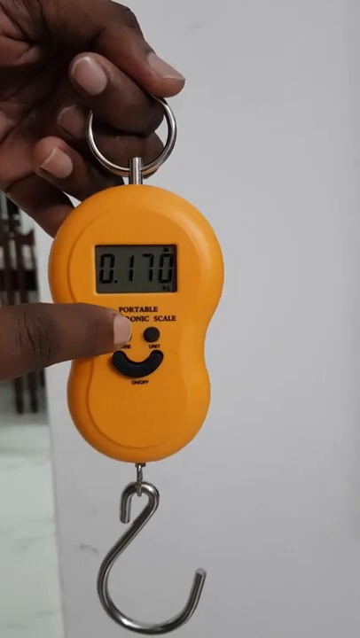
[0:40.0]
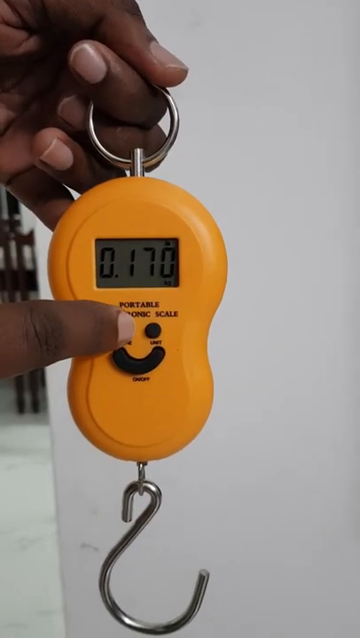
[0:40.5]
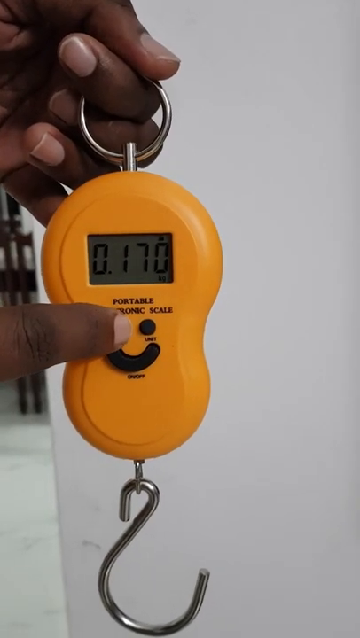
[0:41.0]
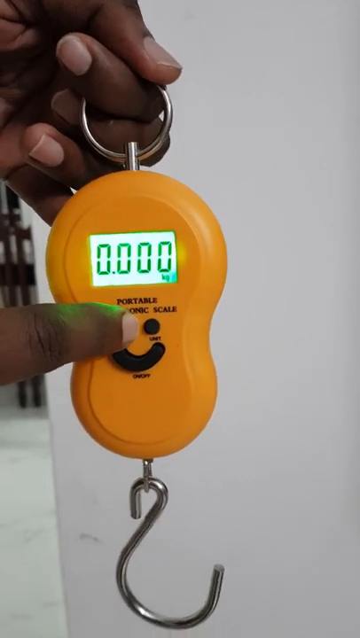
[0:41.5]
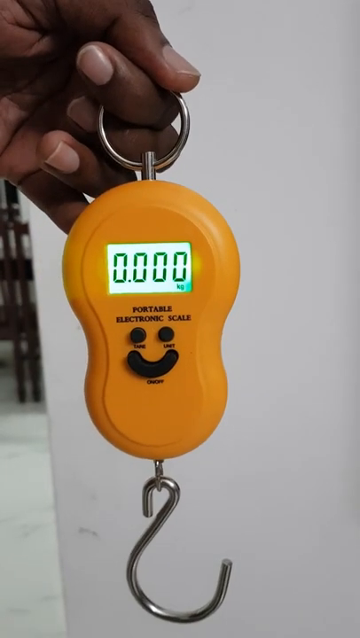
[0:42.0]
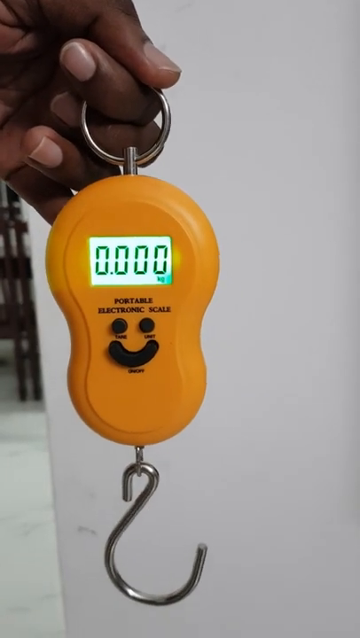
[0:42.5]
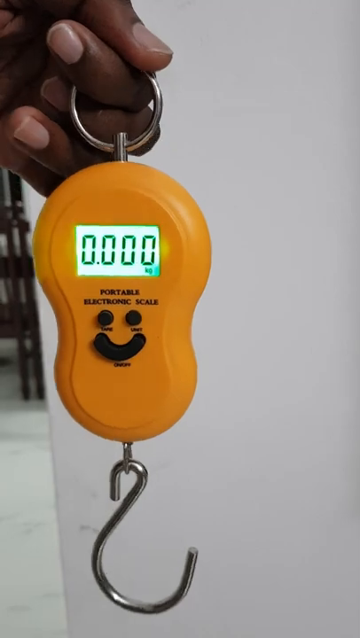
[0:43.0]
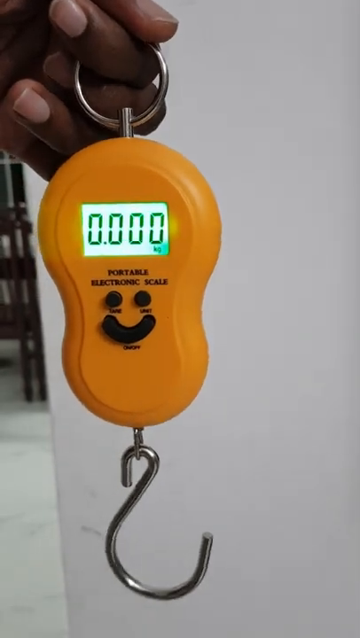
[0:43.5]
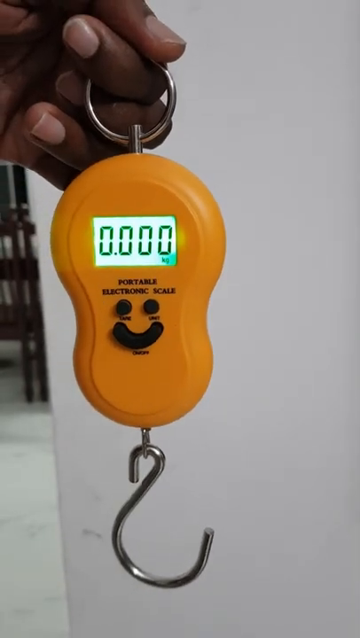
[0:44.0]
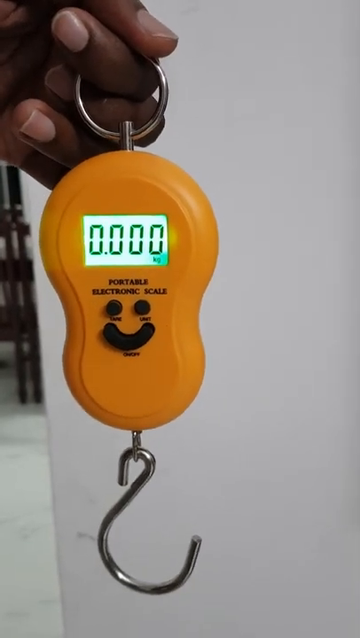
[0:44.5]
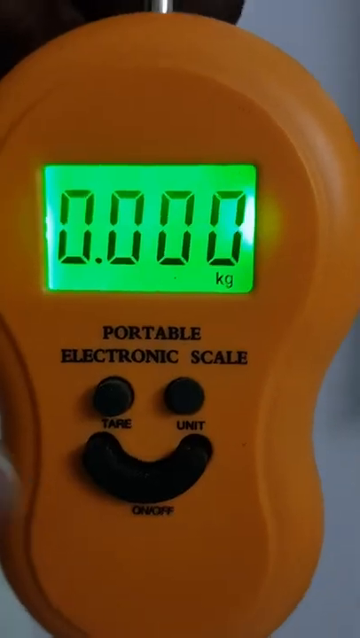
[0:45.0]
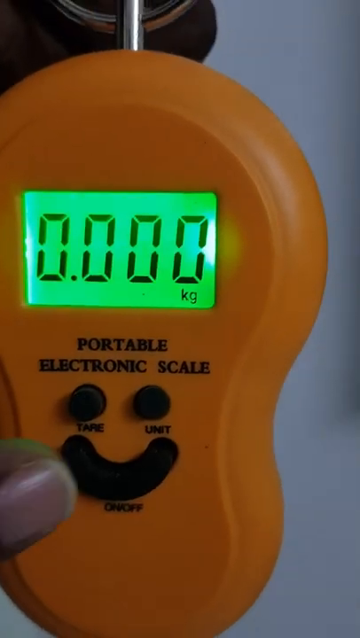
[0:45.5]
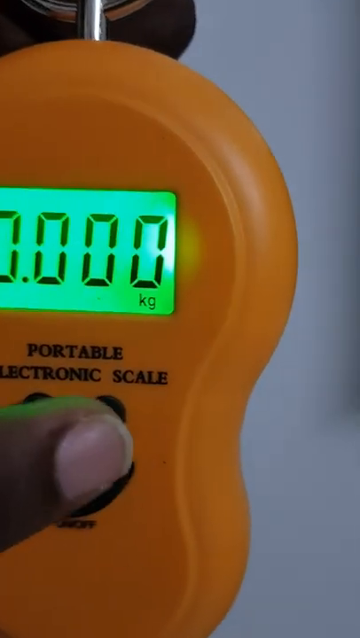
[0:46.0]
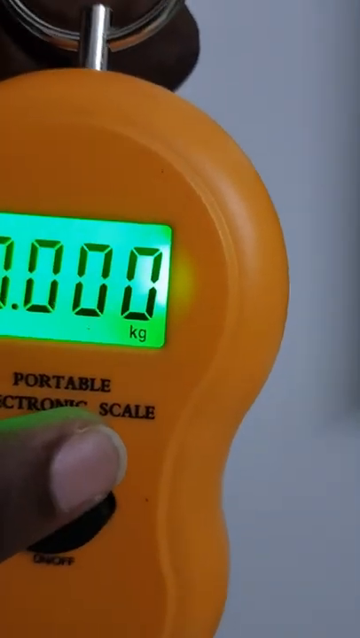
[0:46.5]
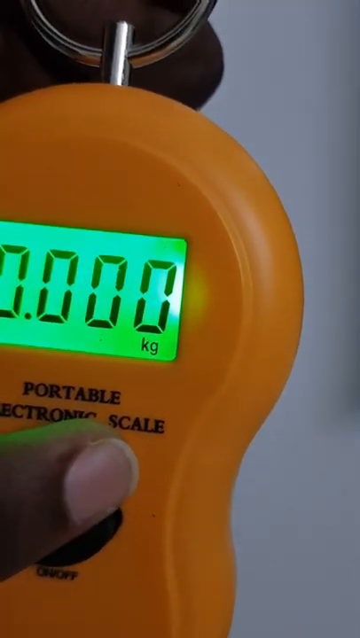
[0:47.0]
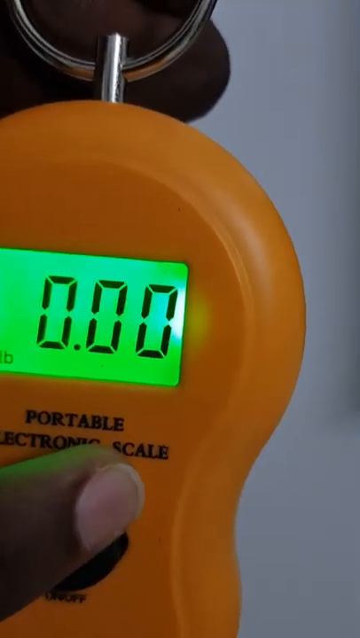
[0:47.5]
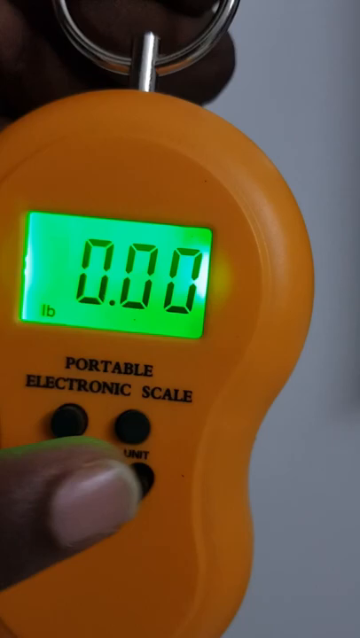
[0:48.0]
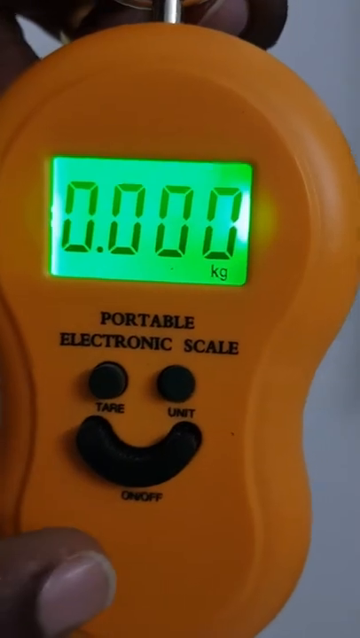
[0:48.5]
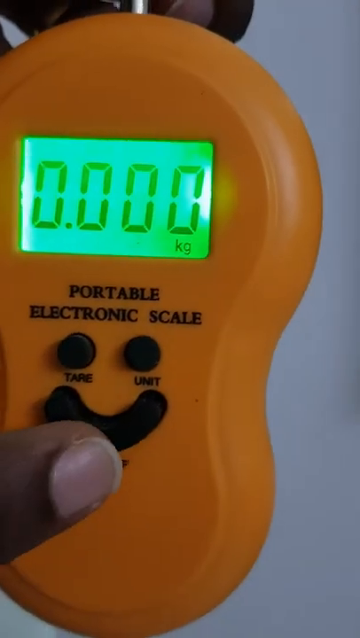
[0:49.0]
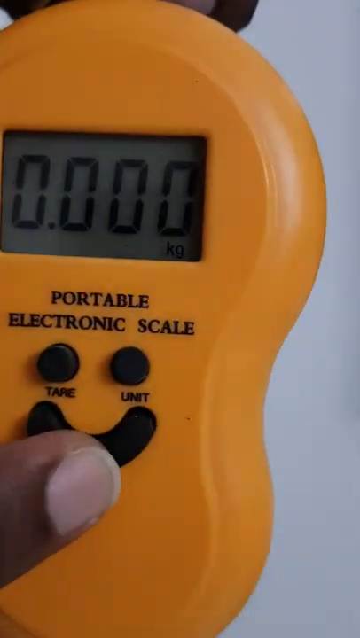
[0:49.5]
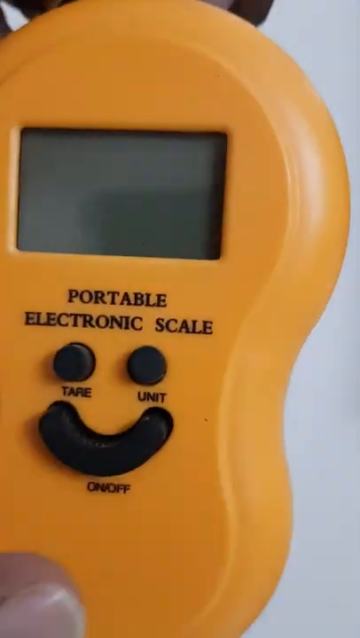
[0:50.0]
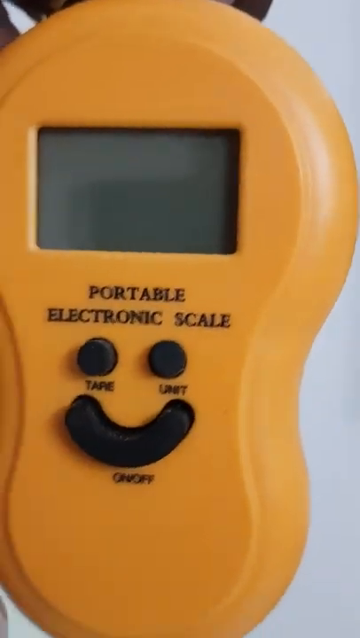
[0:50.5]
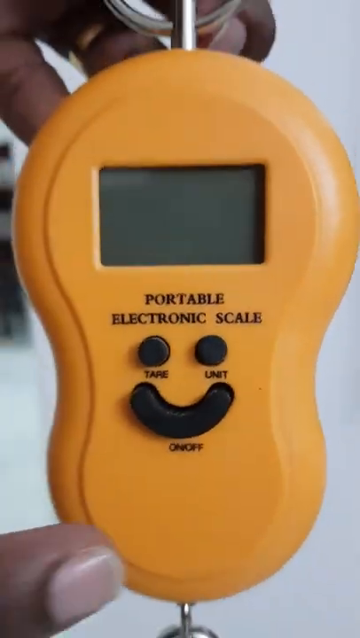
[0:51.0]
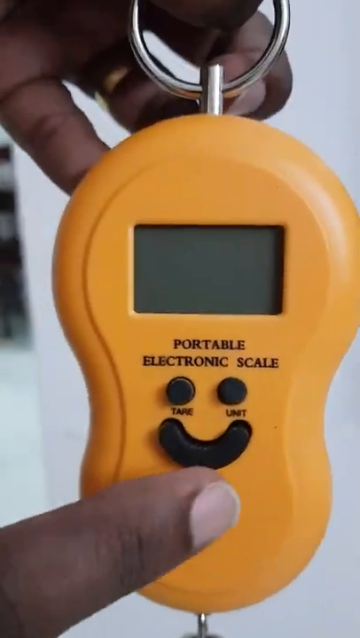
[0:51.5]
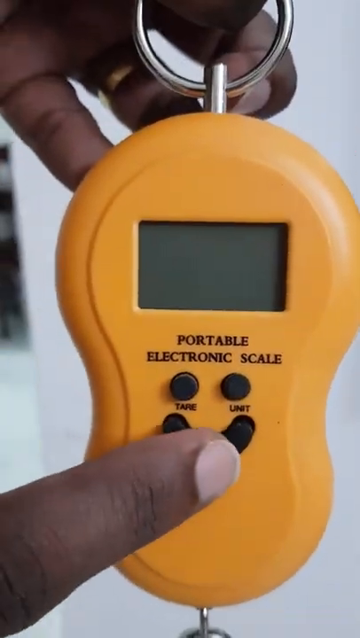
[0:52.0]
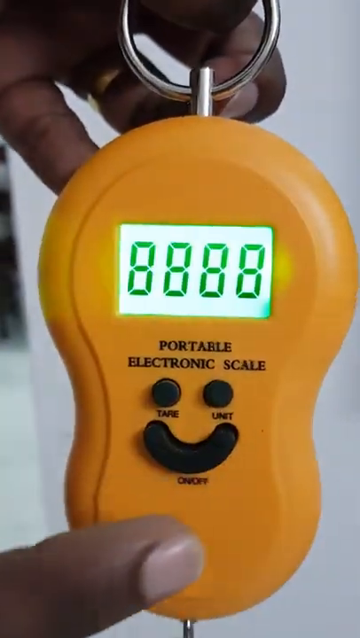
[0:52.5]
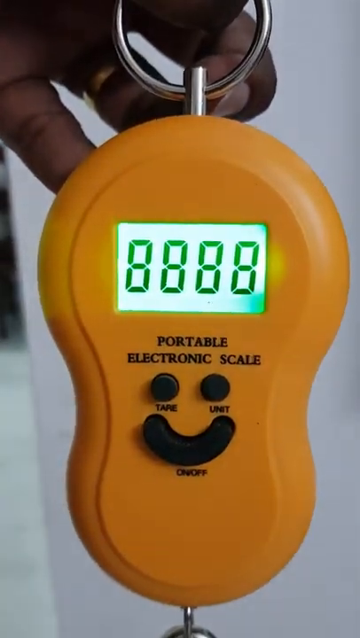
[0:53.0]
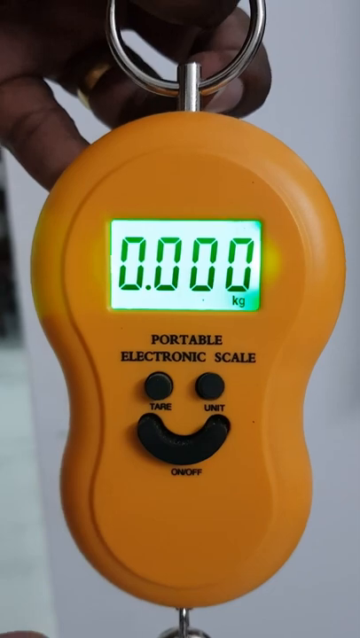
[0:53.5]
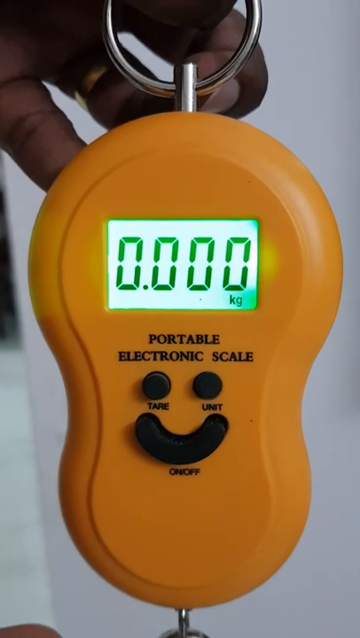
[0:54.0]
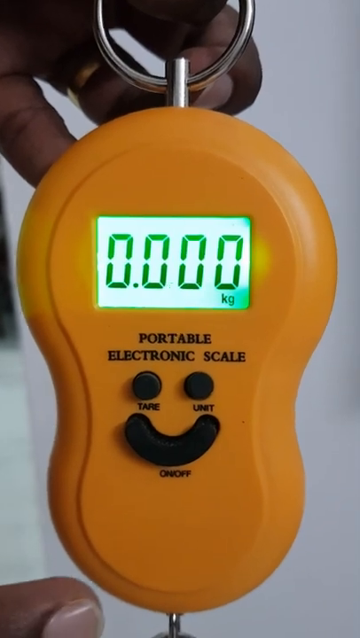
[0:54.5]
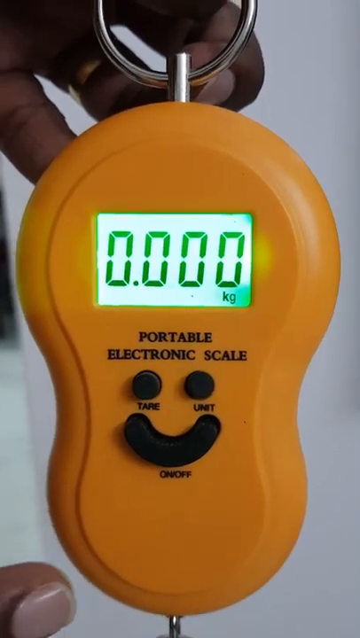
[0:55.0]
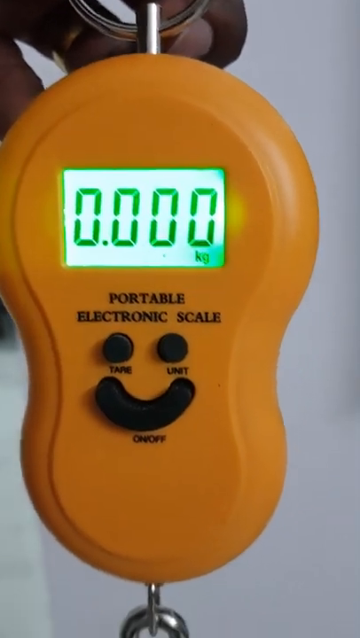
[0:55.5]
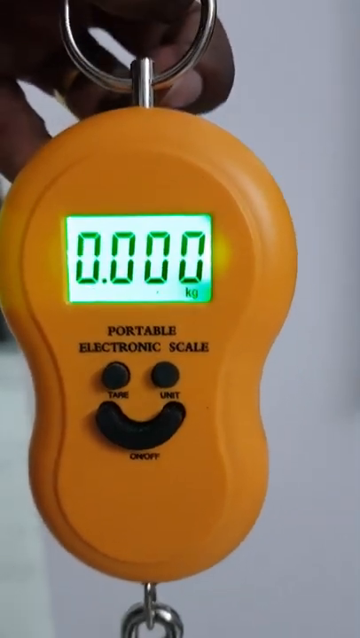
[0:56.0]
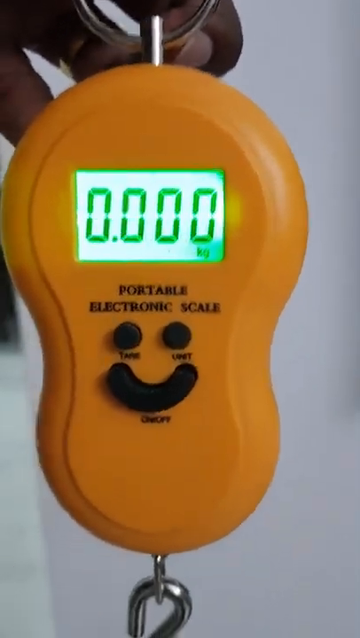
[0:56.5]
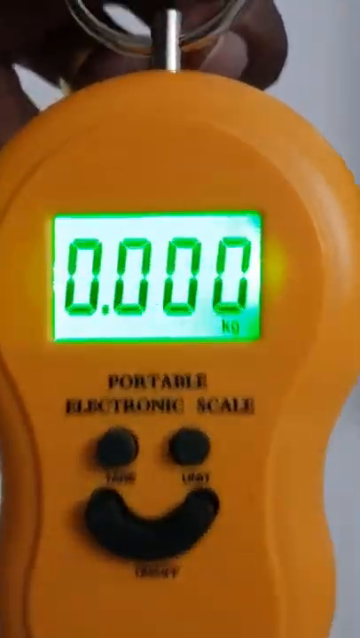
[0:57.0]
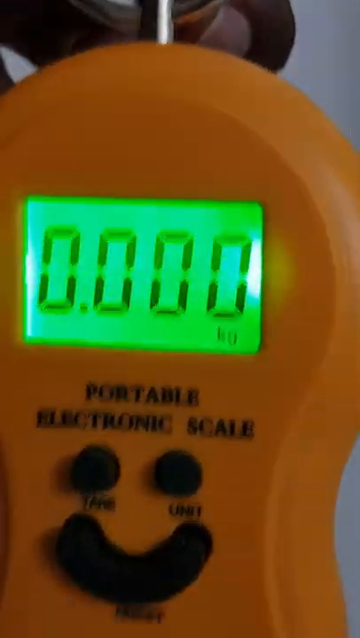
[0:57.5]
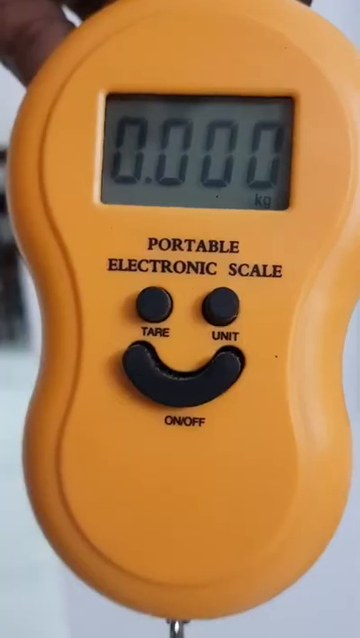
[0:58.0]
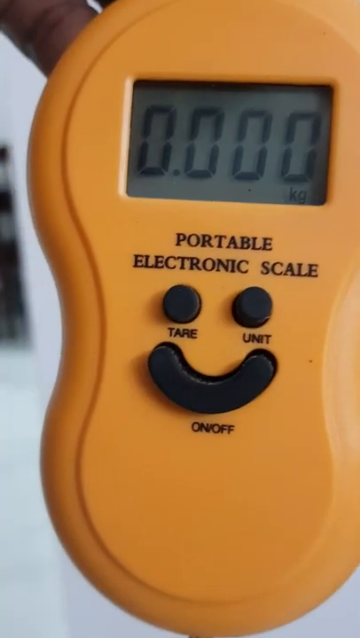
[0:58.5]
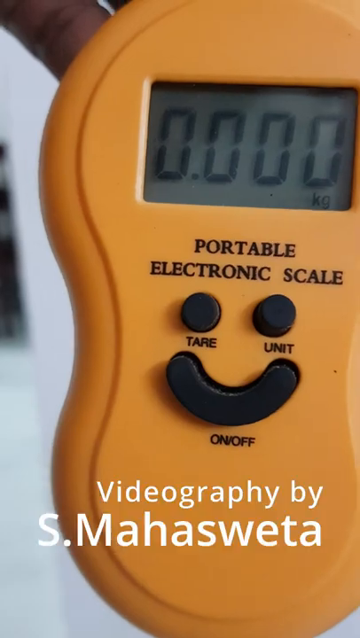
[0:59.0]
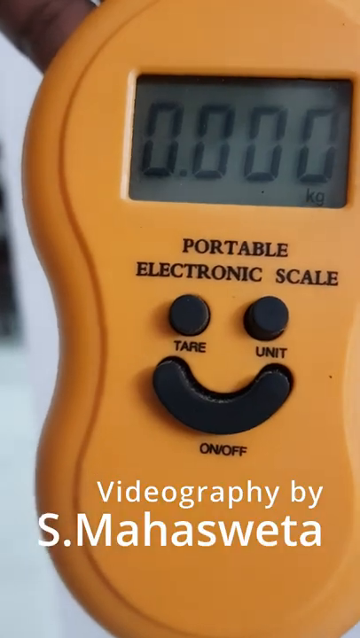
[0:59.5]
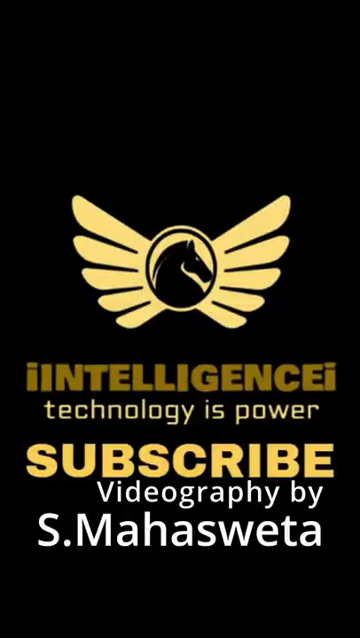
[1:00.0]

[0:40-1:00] The person holds the handheld scale and demonstrates its buttons. The two buttons at the top left and right are the tare and unit buttons, and the button on the lower part is the on-off power button. The person holds the scale by the loop at the top, and on the bottom of the scale there is a hook for hanging the item to be weighed.